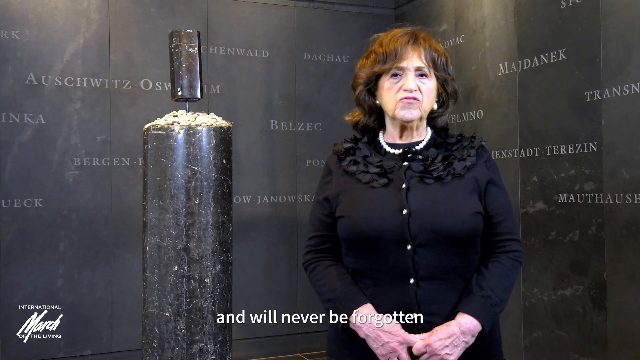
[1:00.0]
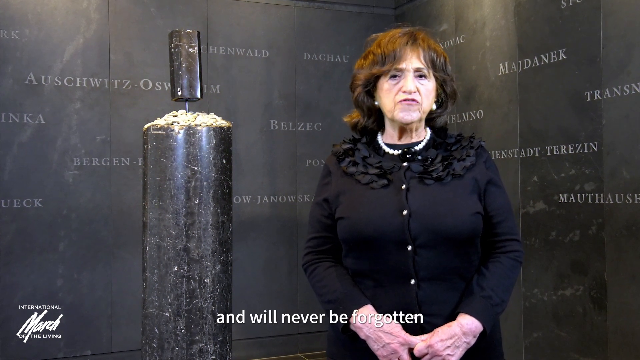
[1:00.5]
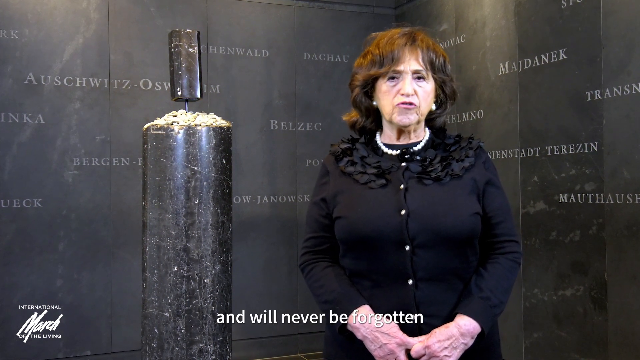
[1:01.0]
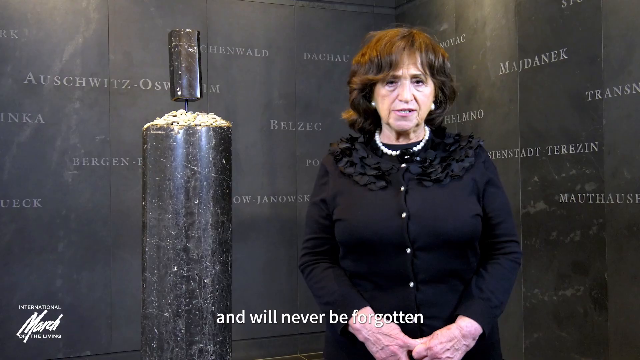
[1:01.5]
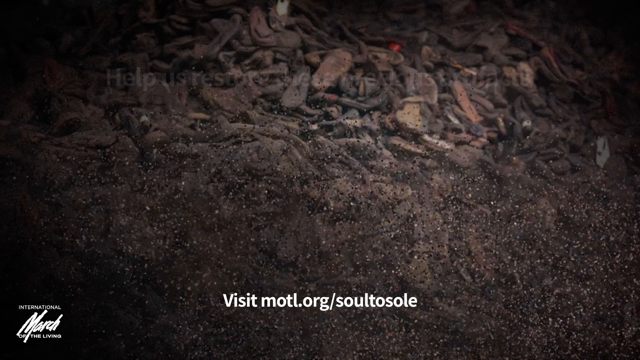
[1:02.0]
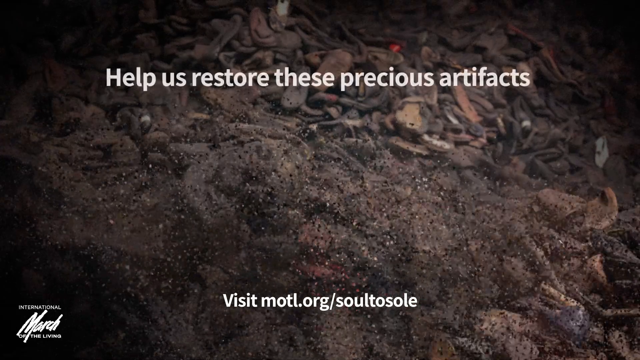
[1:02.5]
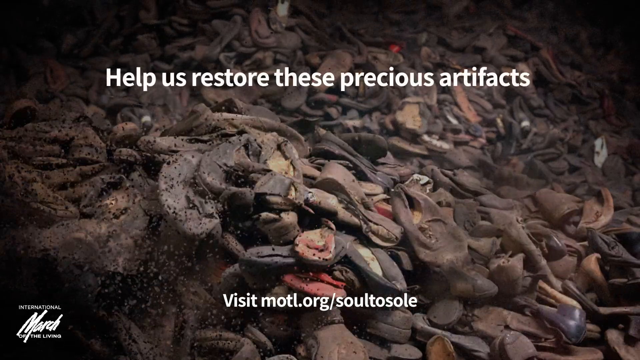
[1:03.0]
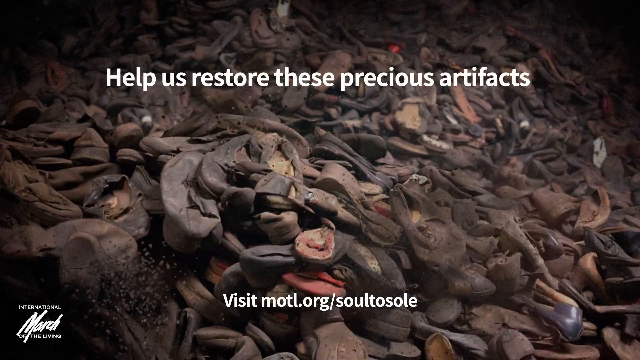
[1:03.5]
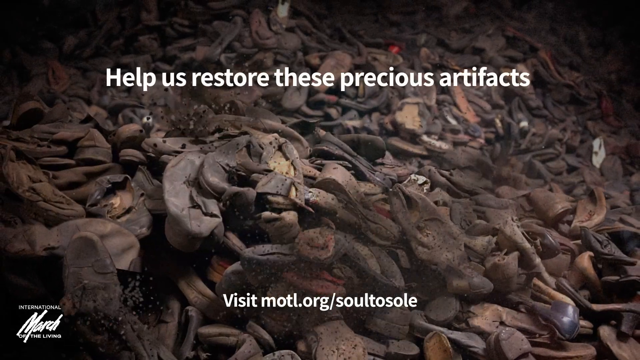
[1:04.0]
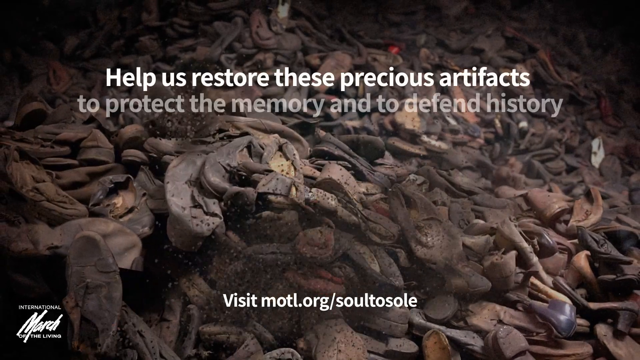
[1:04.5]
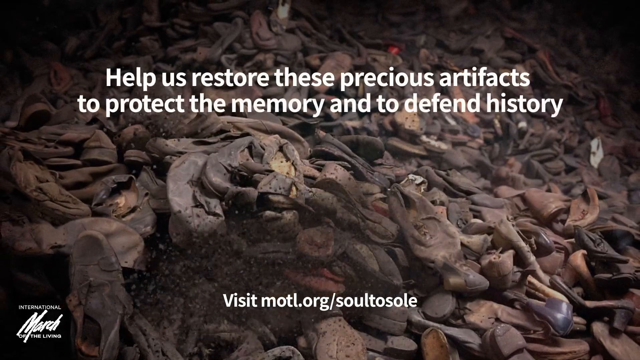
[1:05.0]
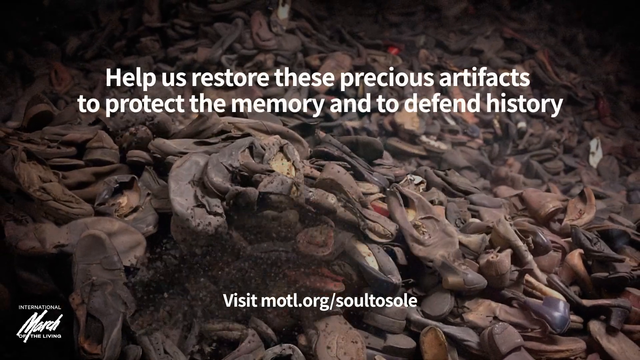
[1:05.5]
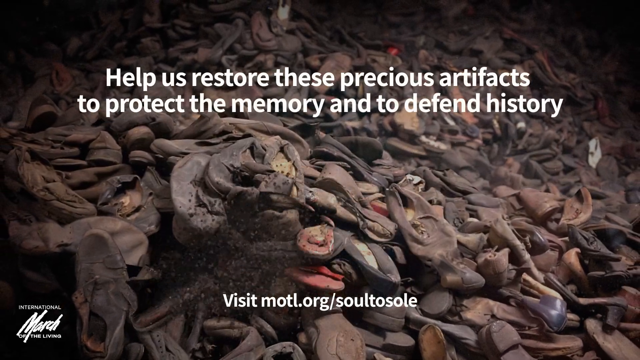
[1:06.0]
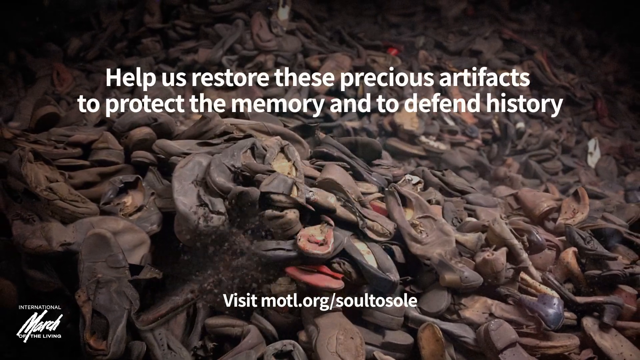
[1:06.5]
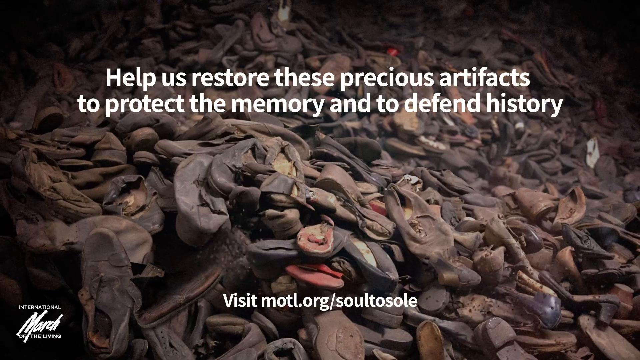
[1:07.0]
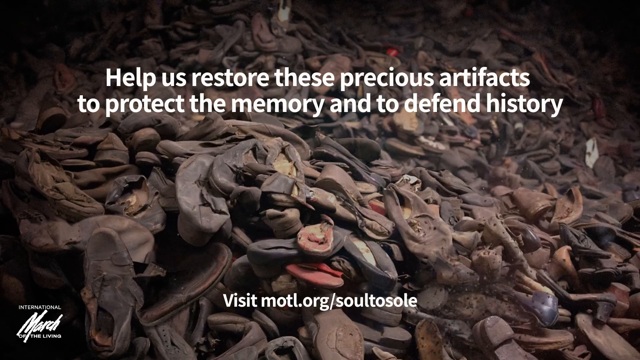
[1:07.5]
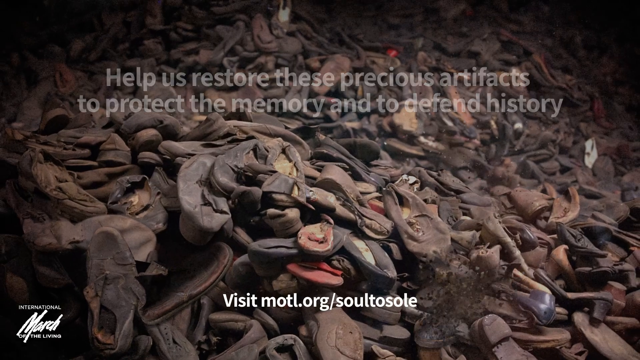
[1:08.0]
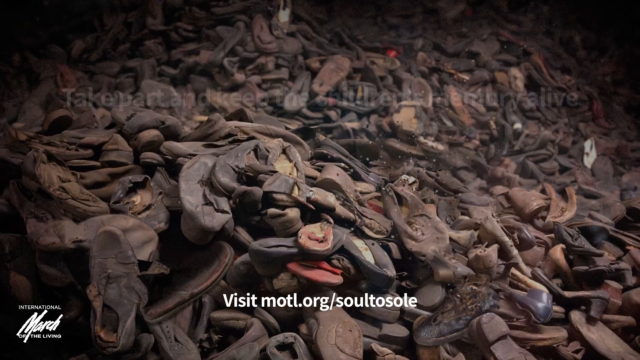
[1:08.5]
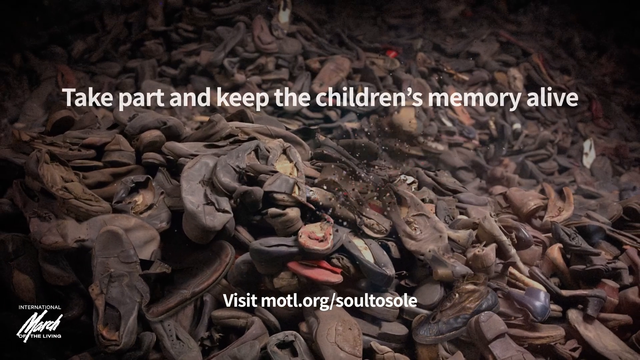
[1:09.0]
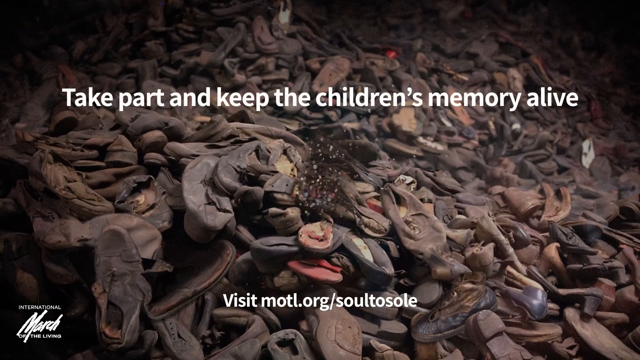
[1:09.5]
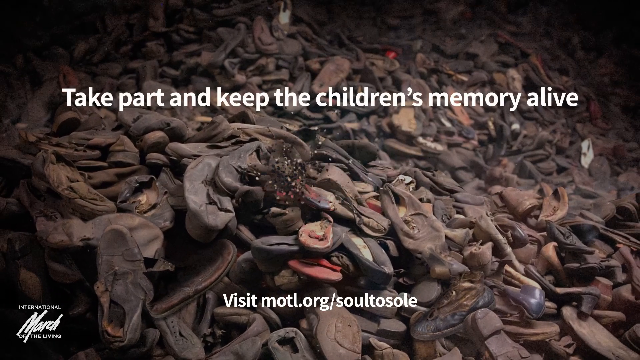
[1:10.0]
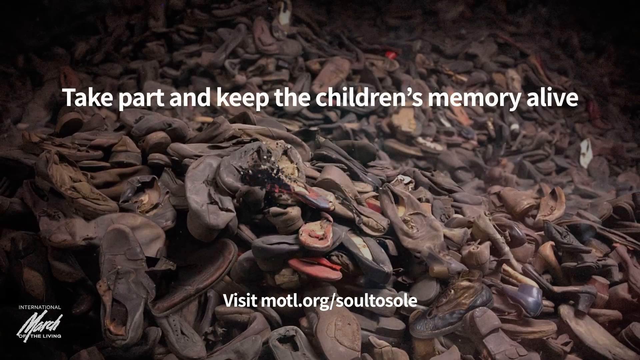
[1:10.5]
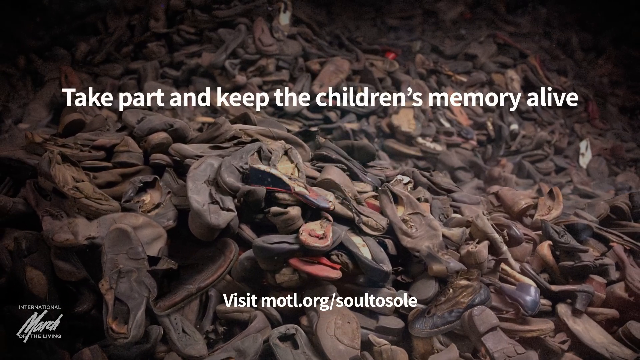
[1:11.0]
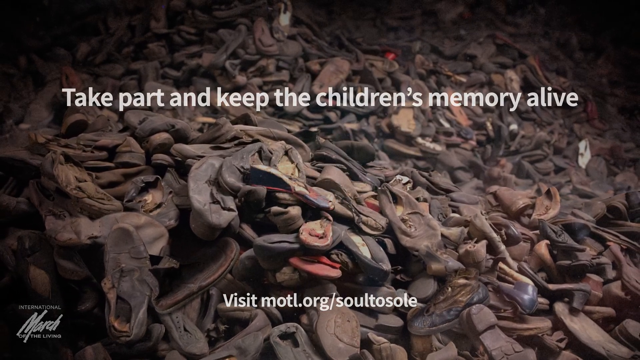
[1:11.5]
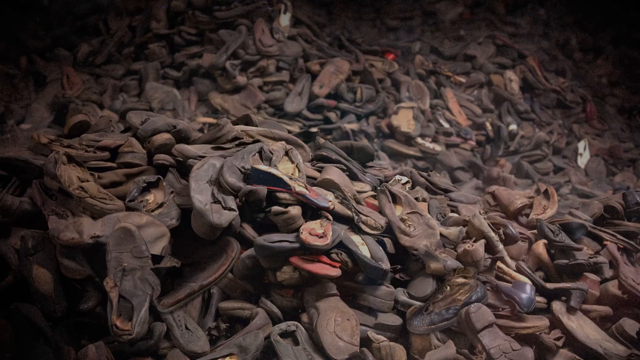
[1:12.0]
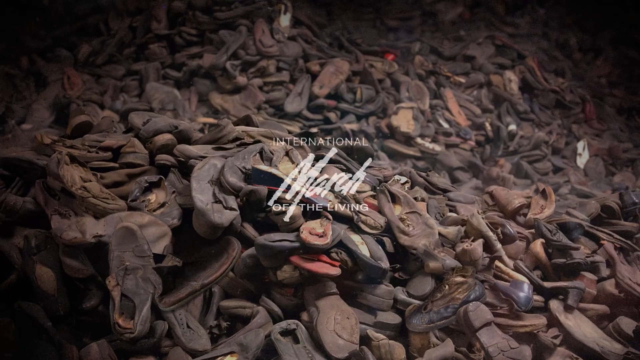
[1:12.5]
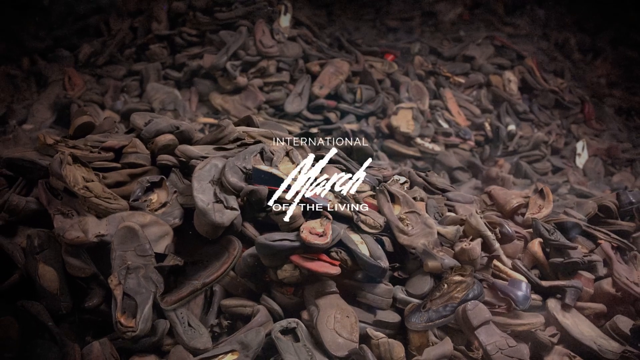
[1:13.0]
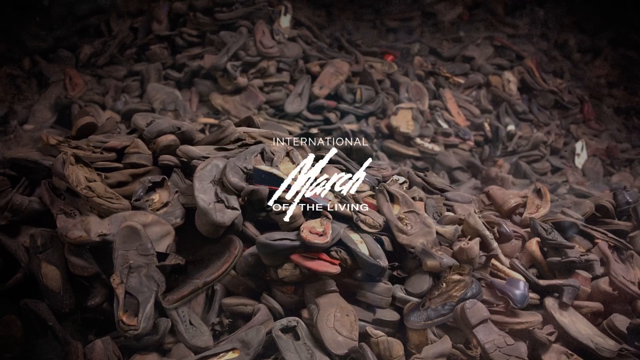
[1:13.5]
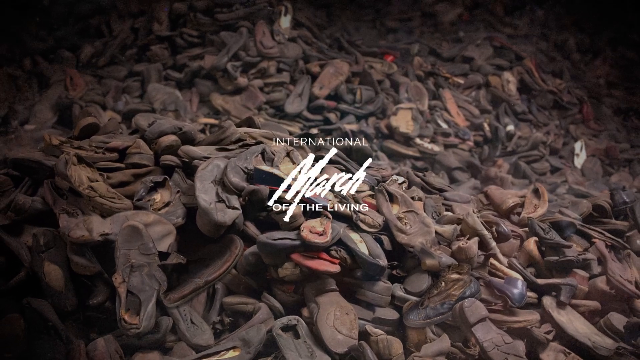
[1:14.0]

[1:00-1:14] A woman dressed in black speaks to the camera from inside a Holocaust museum. Next to her is a black marble sculpture in the form of a column; on top of the column is a smaller cylinder held up by a black stick, and underneath the smaller cylinder is a mound of small white pebbles. Behind her is a black screen with the names of concentration camps printed in grey, such as Bergen, Belzec and Dachau. She talks directly to the camera, appealing to people for help preserving the memories of the children brutally murdered during the Holocaust so that they will never be forgotten. After the interview comes an image of a large pile of the shoes of children killed during the Holocaust, with white text superimposed that says "help us restore these precious artifacts".